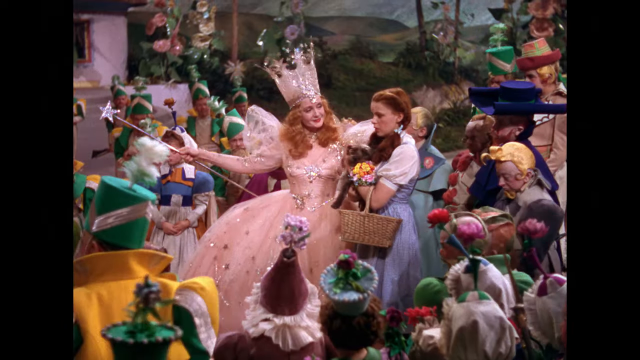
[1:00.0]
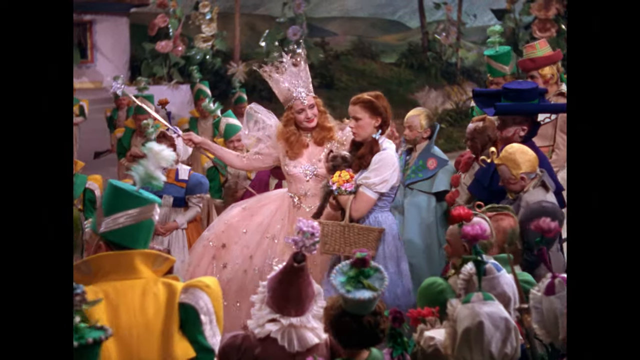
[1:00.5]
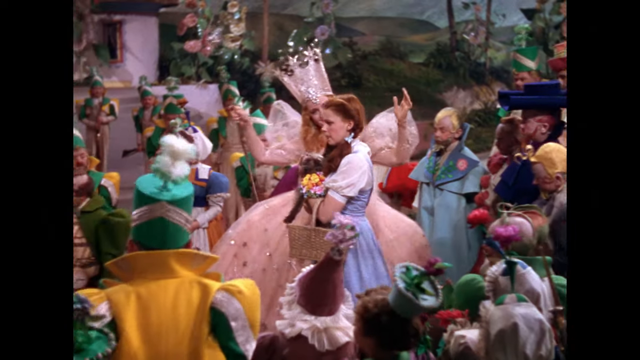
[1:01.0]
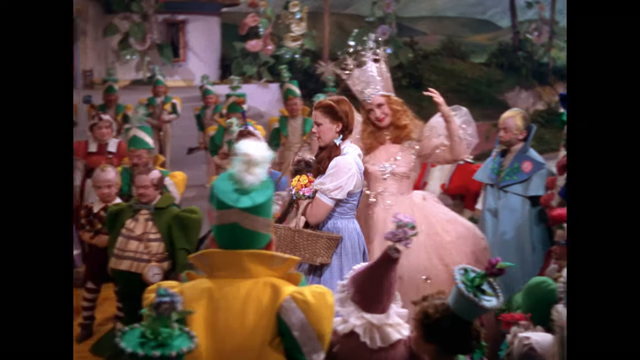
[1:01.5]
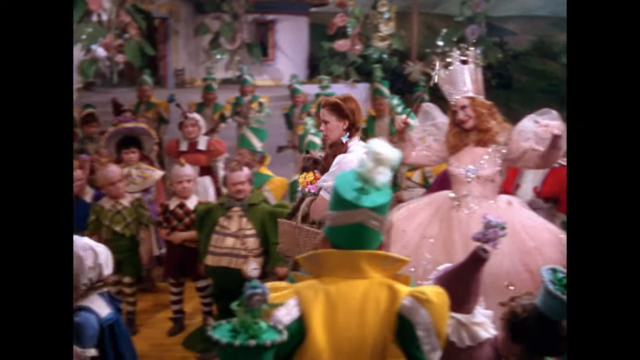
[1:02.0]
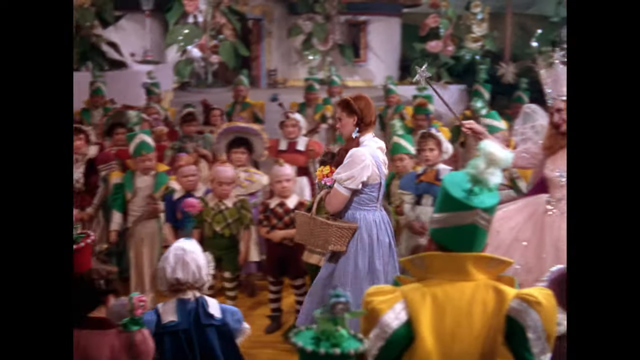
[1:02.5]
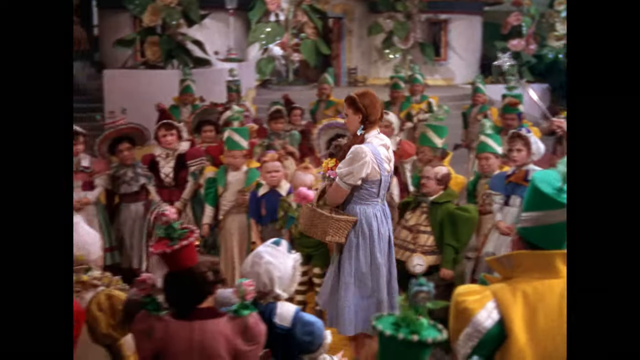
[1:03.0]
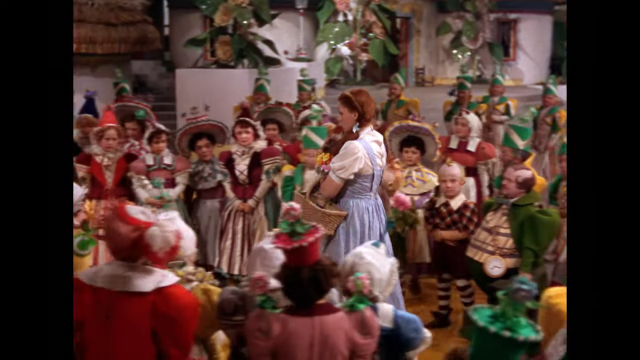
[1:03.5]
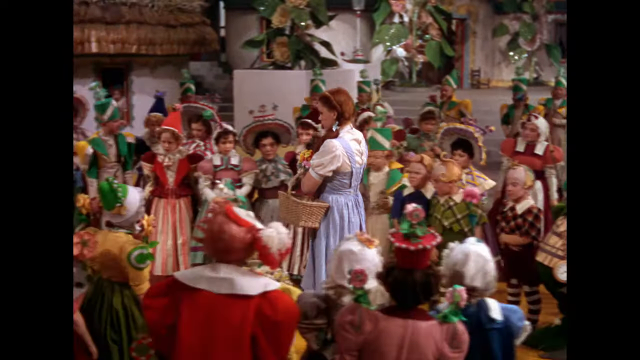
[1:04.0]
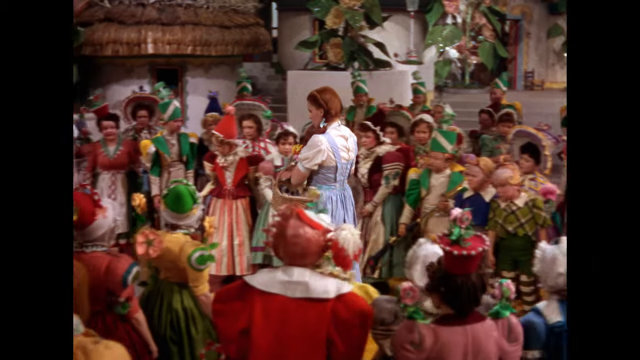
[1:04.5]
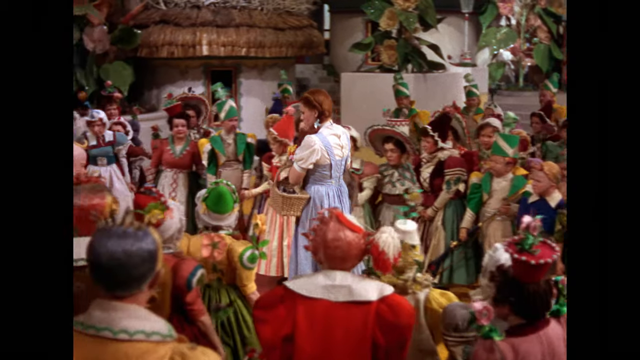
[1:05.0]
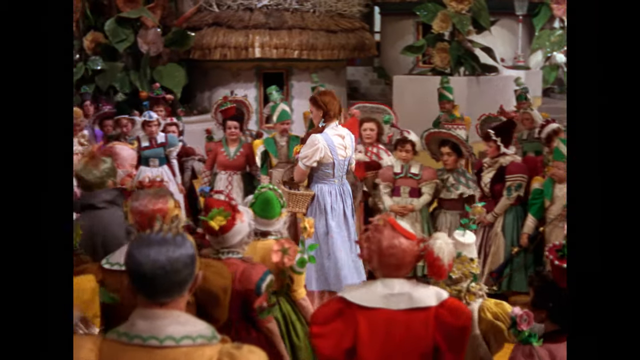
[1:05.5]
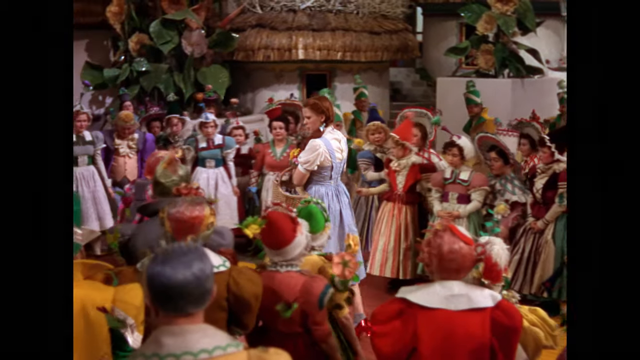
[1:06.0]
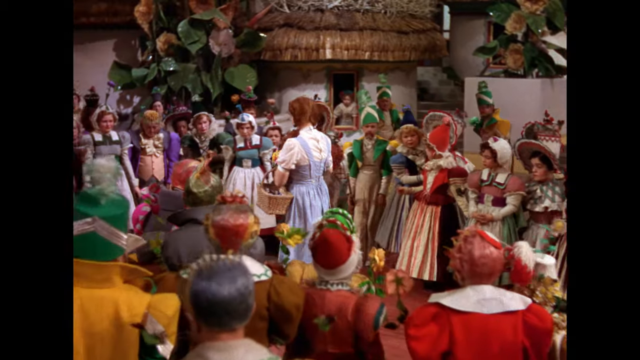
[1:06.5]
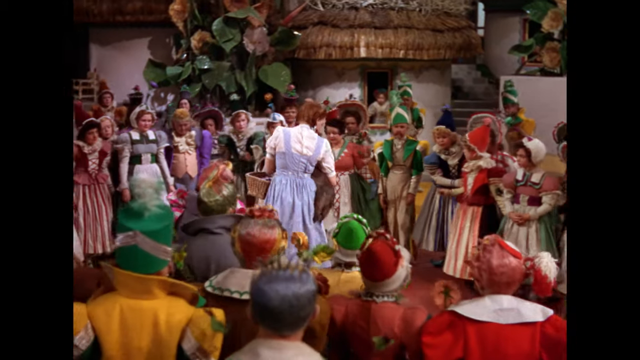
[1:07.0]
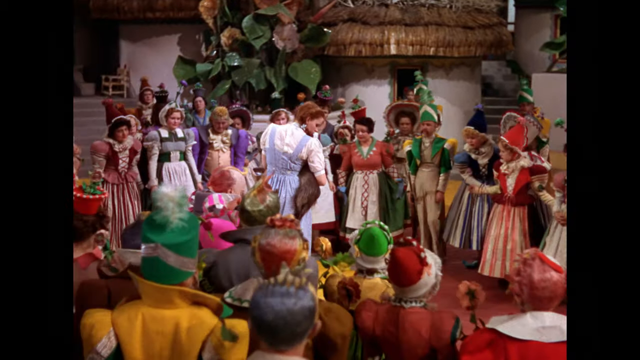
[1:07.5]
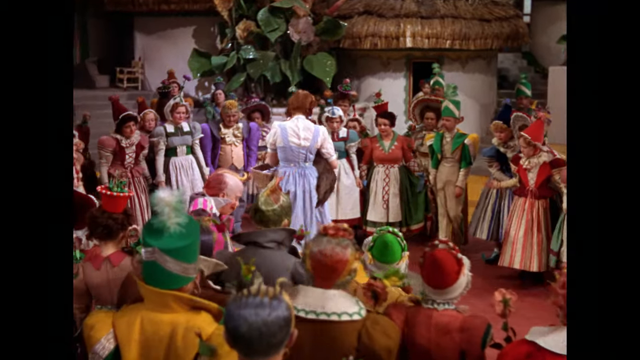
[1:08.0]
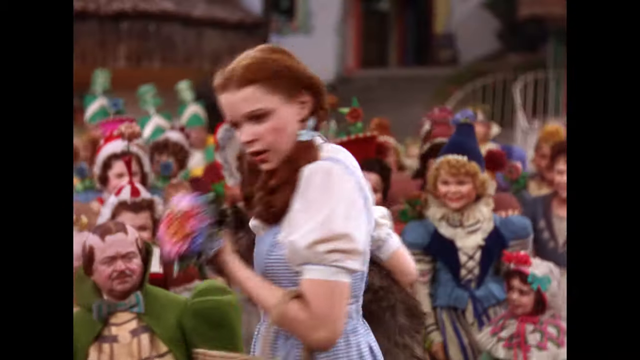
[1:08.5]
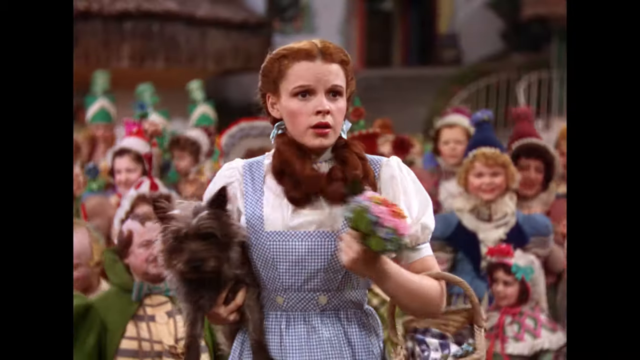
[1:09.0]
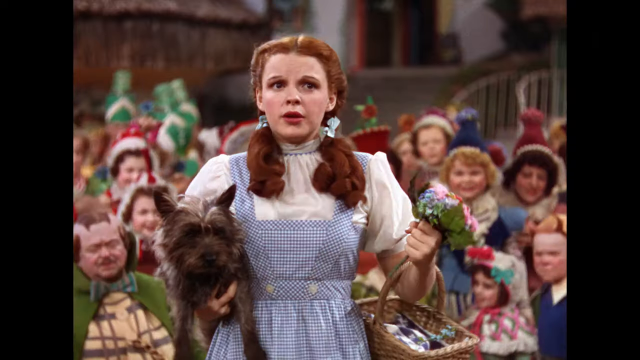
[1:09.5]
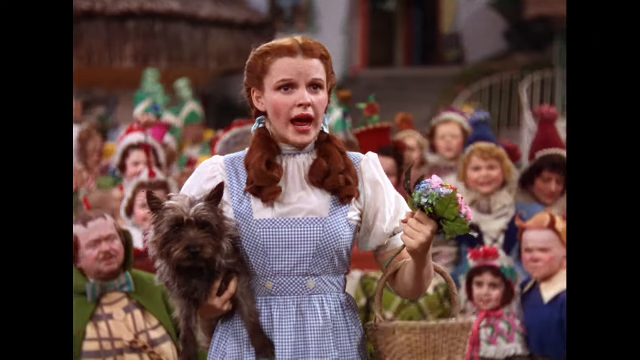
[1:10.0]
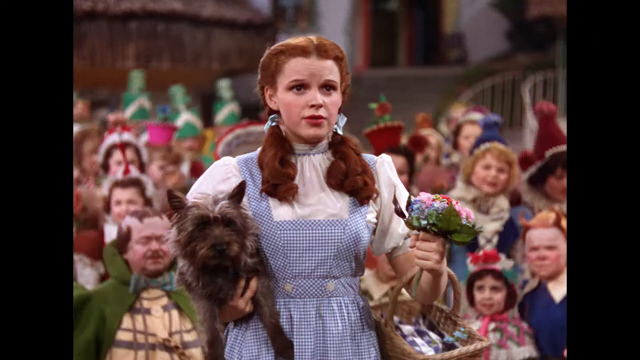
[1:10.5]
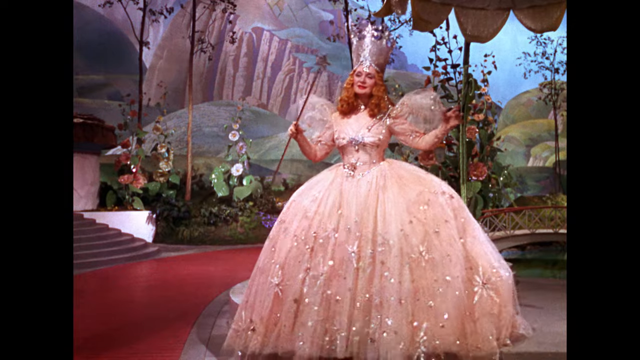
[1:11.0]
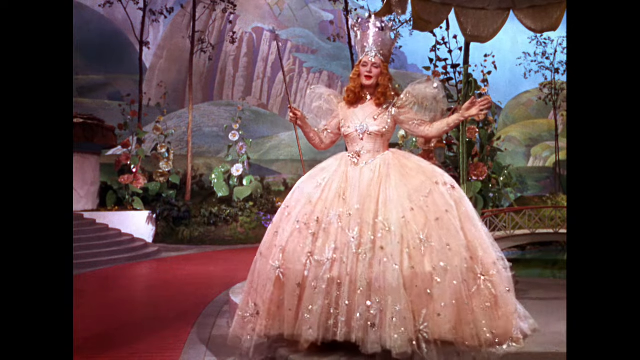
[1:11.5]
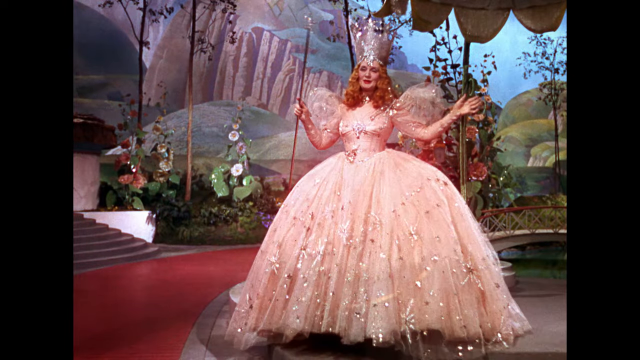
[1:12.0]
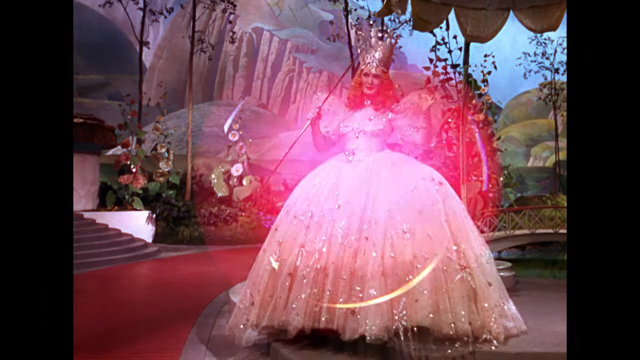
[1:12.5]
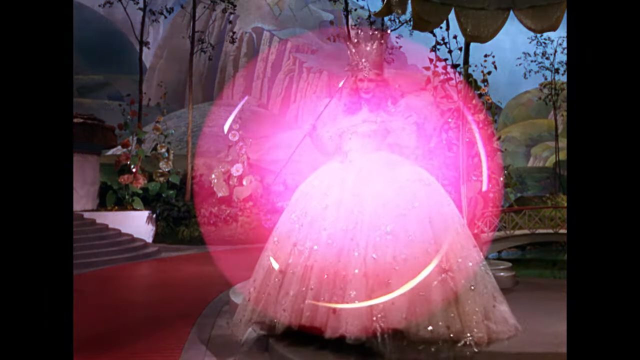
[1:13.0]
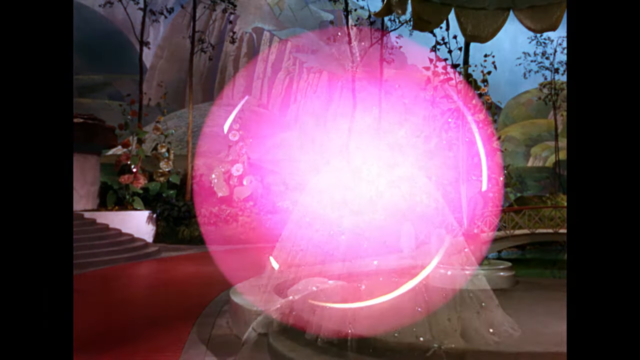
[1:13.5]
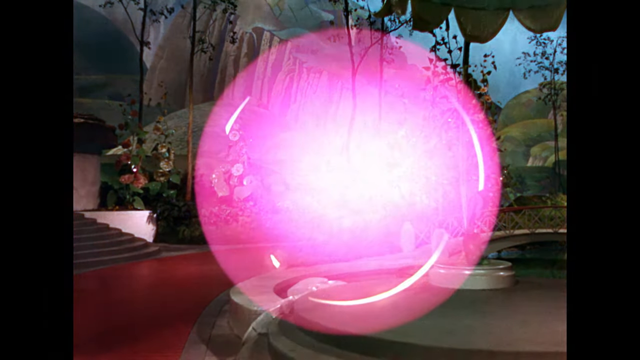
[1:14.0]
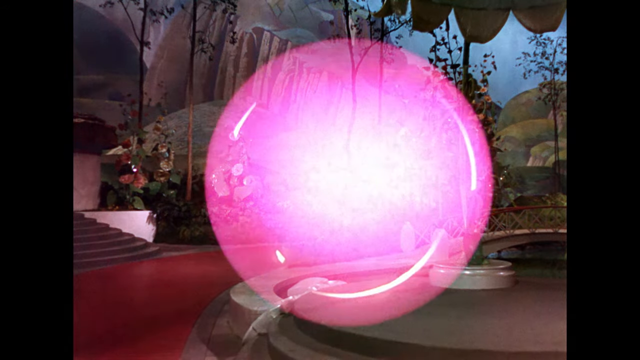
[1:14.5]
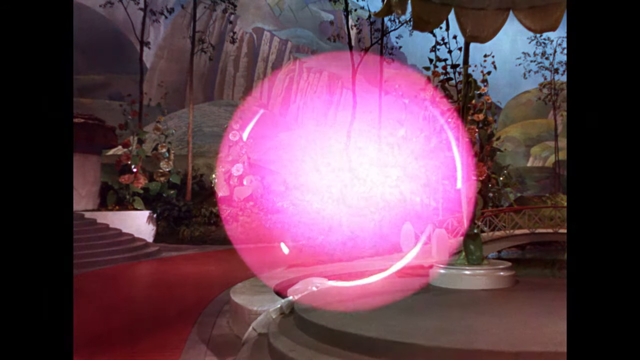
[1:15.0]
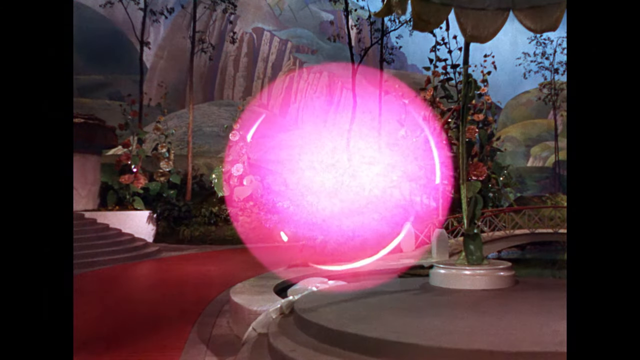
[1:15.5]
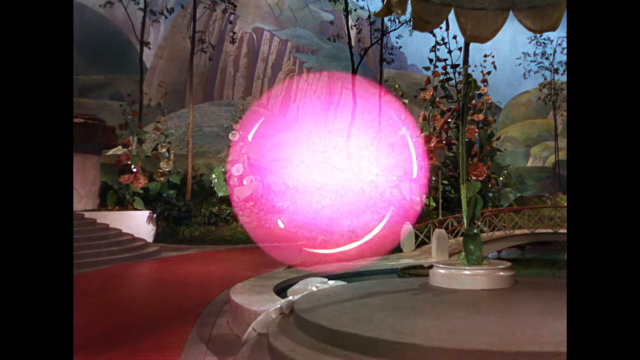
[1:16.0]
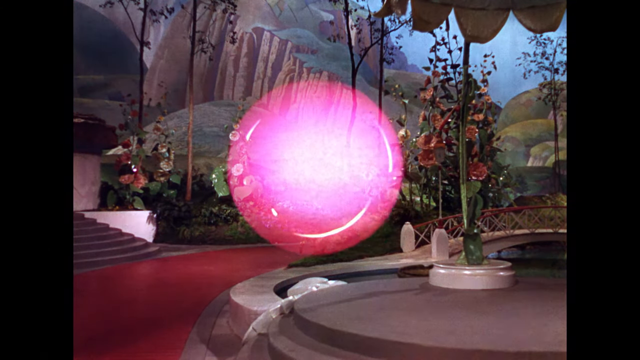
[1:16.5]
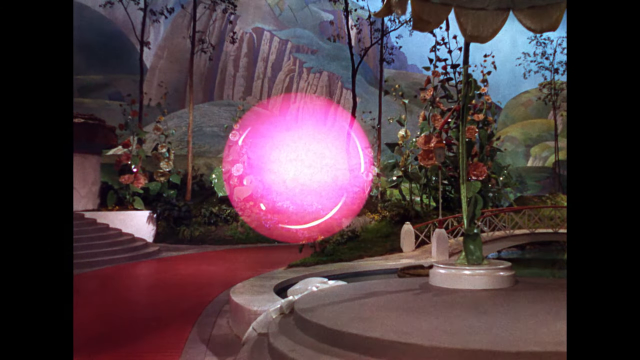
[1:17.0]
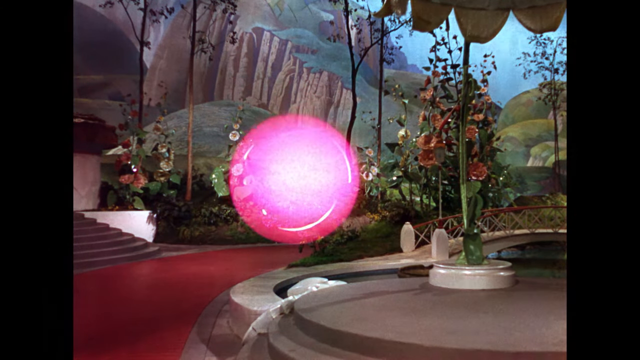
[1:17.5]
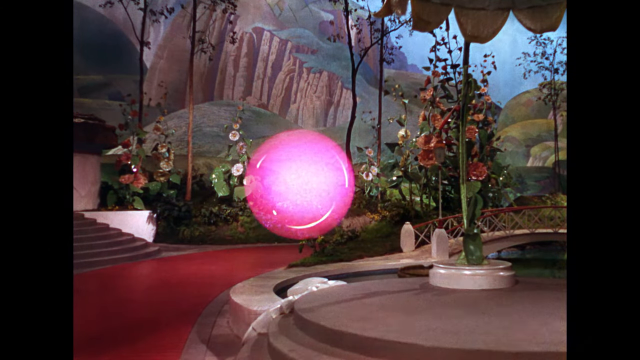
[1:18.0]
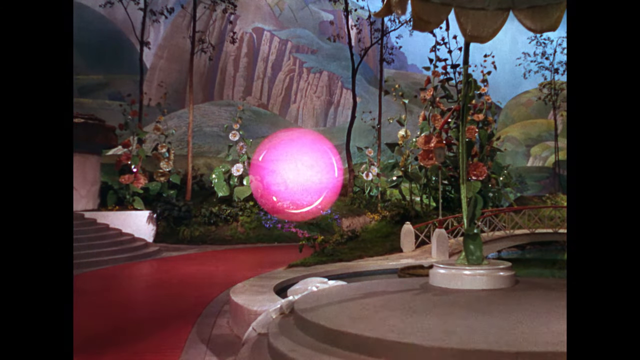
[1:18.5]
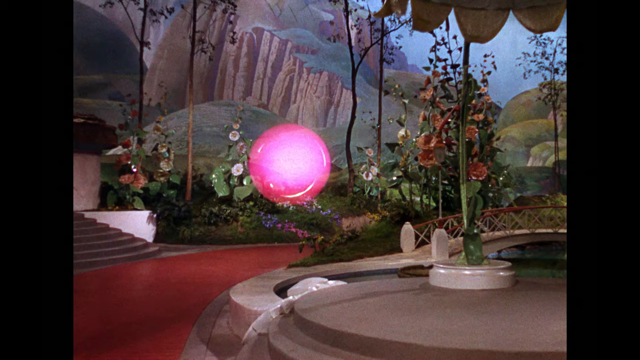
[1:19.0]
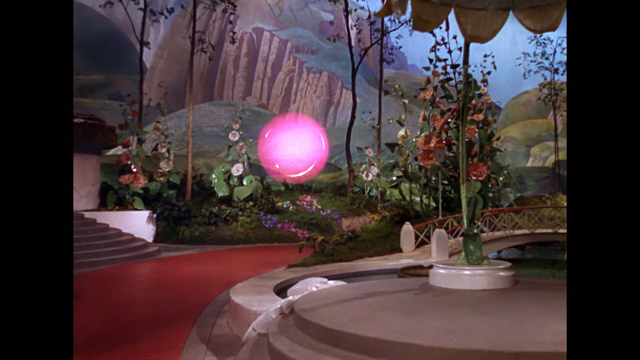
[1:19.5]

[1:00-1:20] The Fairy Godmother and Dorothy are surrounded by a large group of munchkins. The Fairy Godmother holds out her right arm with the wand in her hand, apparently gesturing for Dorothy to walk in that direction. Dorothy, holding a small black dog, a small bouquet of flowers and a brown picnic basket on her arm, seems a bit hesitant but begins walking forward along the path. Many small munchkin people in colorful clothing with interesting hats and hairstyles surround the path and back up a little so Dorothy can keep walking. At the end of the path, Dorothy hesitates and starts looking at the ground behind her. She turns around, and in a closeup she speaks with a concerned look on her face. The camera turns to the fairy godmother, who puts her hands out to the side as she speaks and raises her wand in the air. A bright pink circle appears over her, she disappears into it, and the circle floats away toward the hills in the background image on the stage. The small munchkin people start chasing after the floating pink circle.